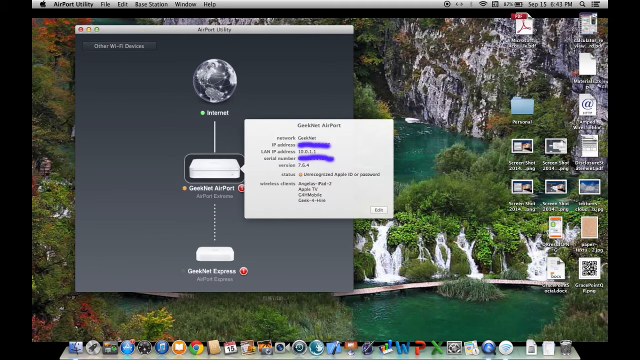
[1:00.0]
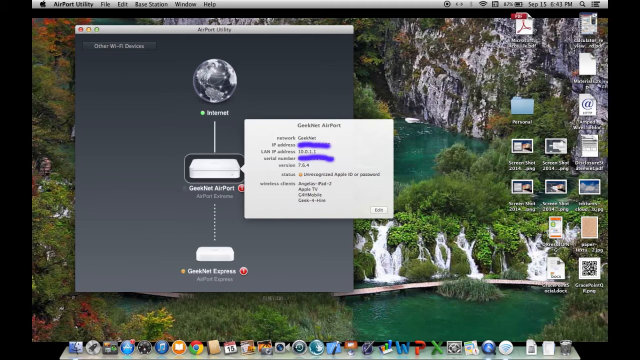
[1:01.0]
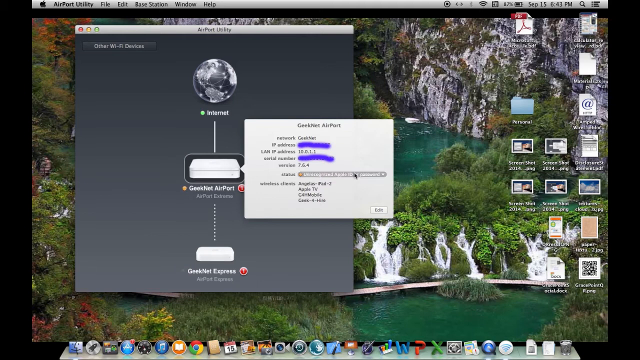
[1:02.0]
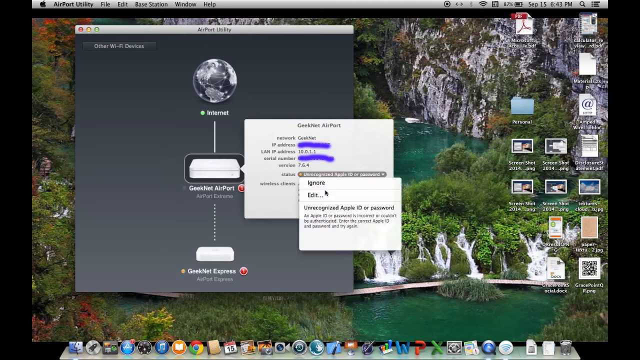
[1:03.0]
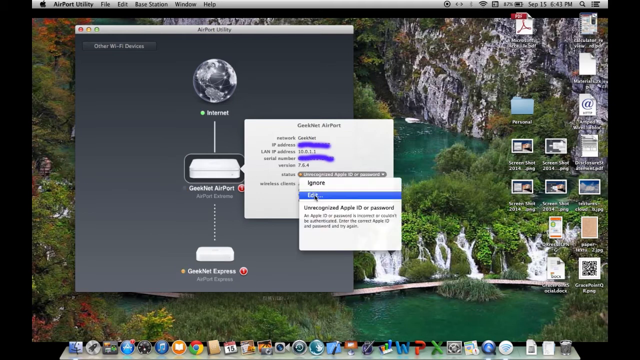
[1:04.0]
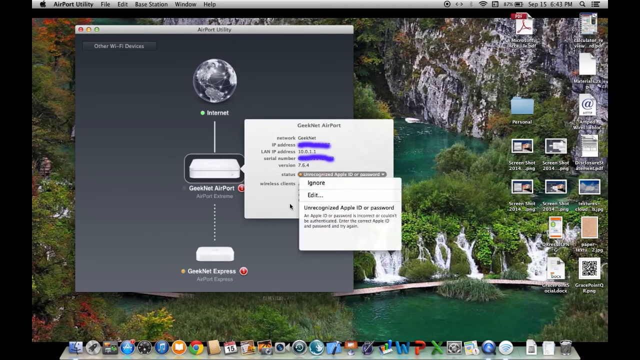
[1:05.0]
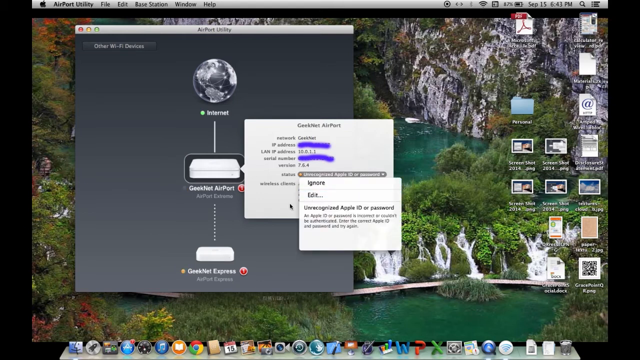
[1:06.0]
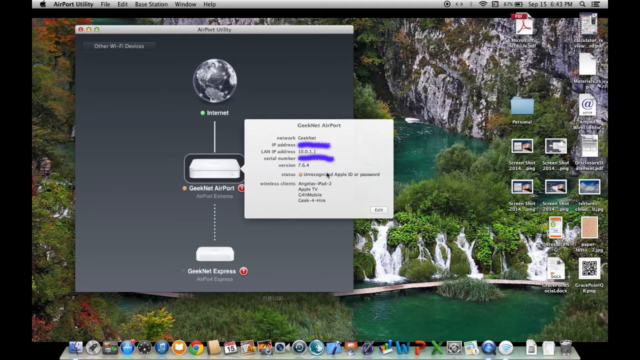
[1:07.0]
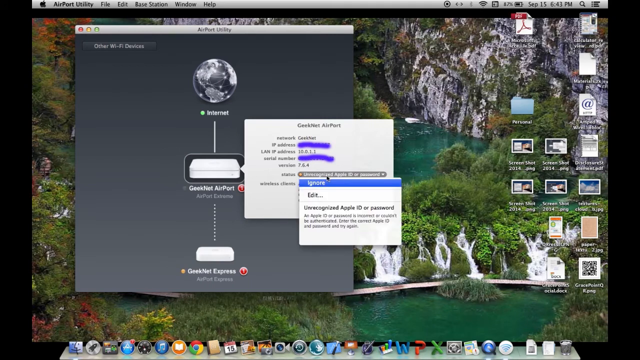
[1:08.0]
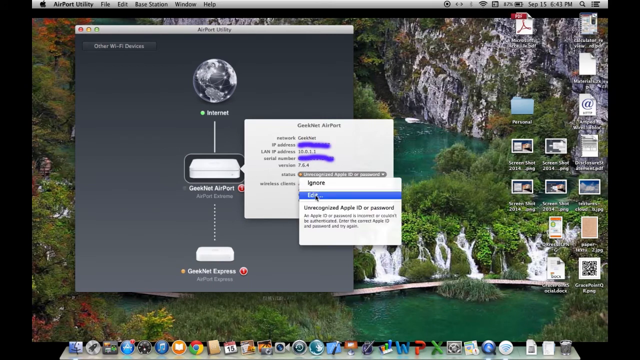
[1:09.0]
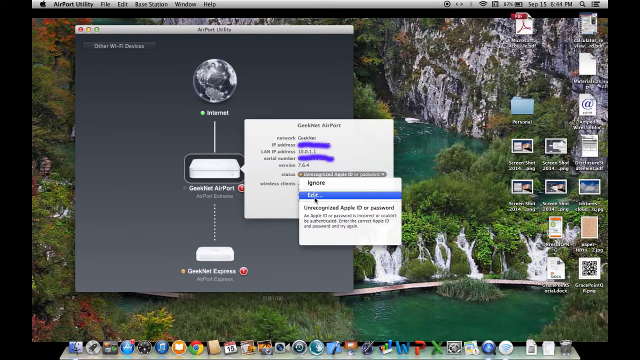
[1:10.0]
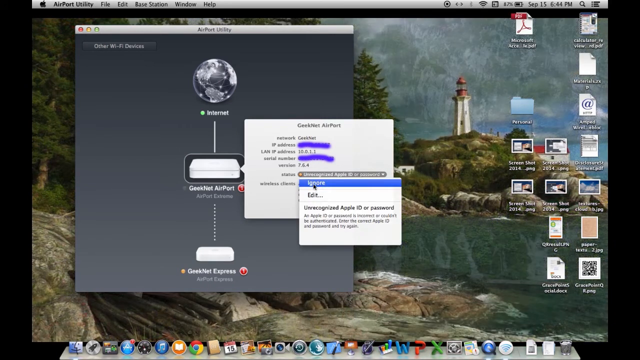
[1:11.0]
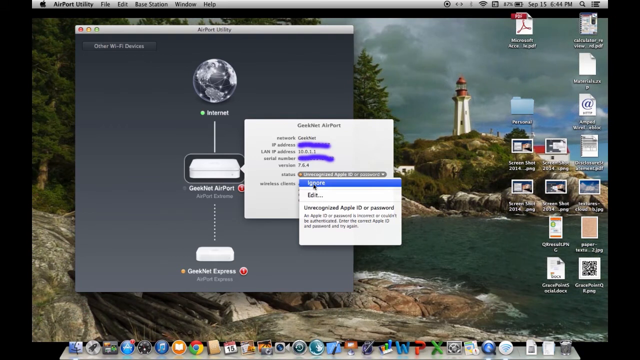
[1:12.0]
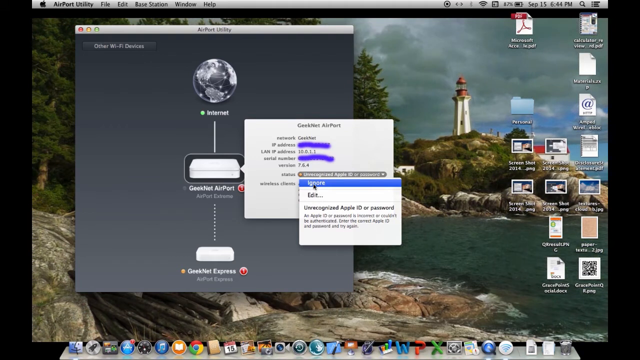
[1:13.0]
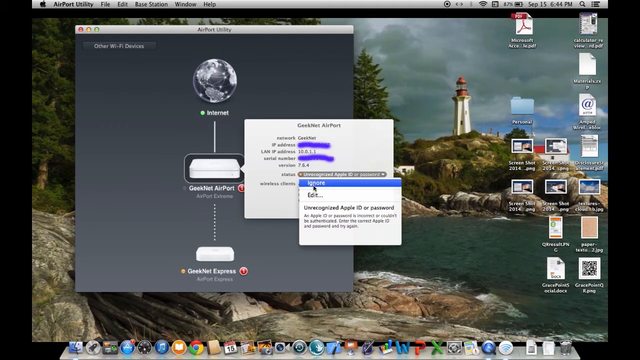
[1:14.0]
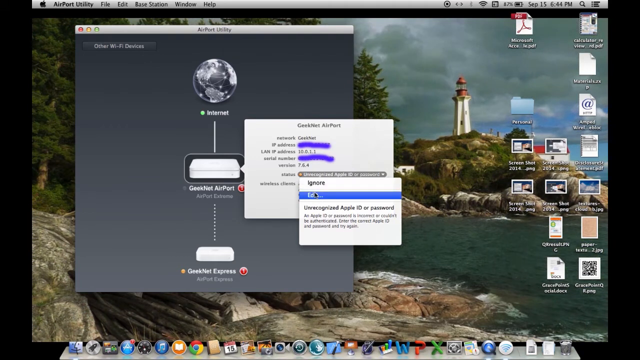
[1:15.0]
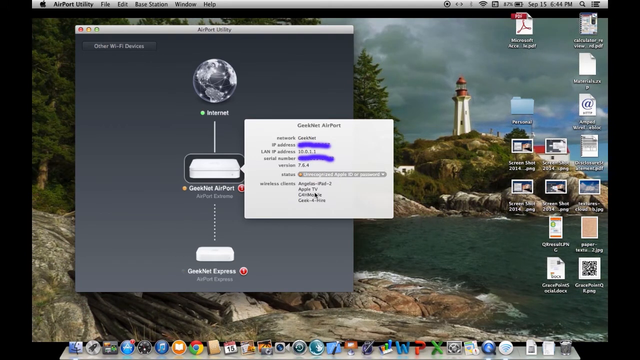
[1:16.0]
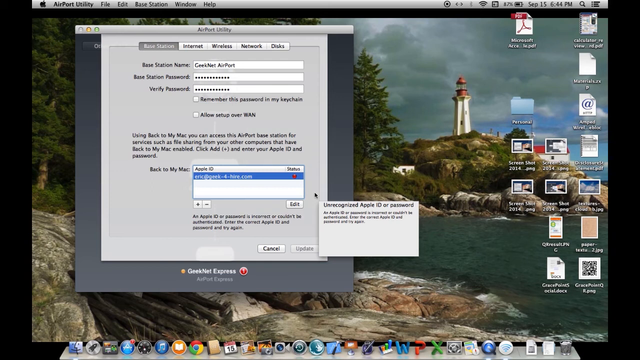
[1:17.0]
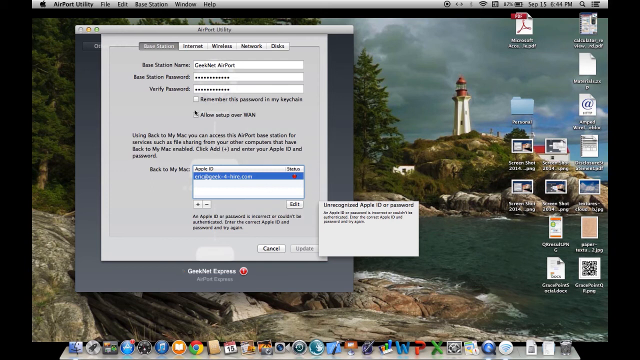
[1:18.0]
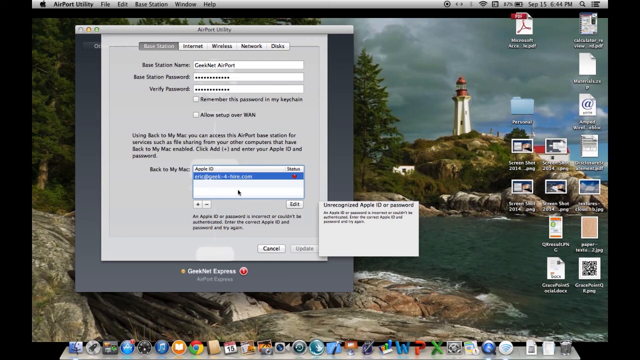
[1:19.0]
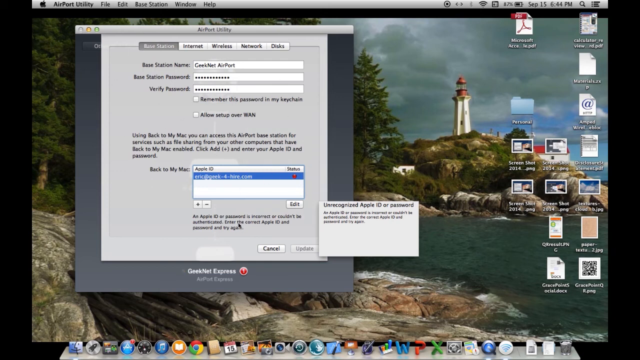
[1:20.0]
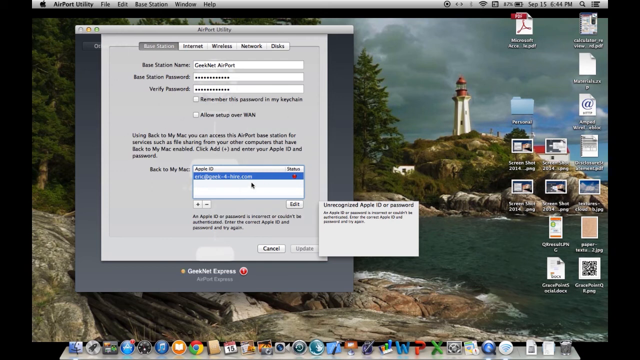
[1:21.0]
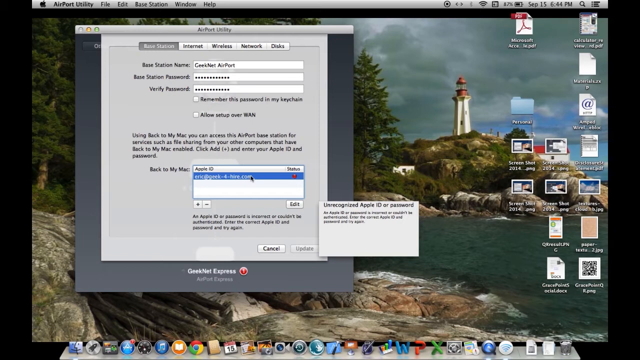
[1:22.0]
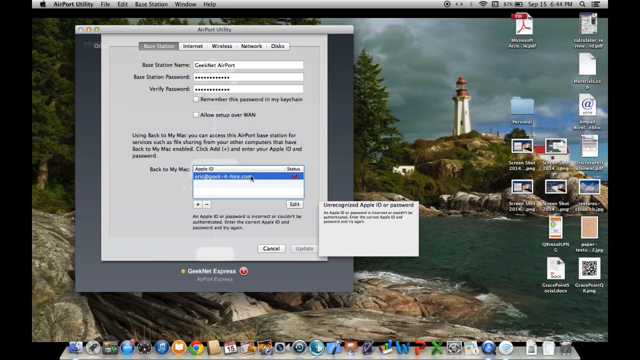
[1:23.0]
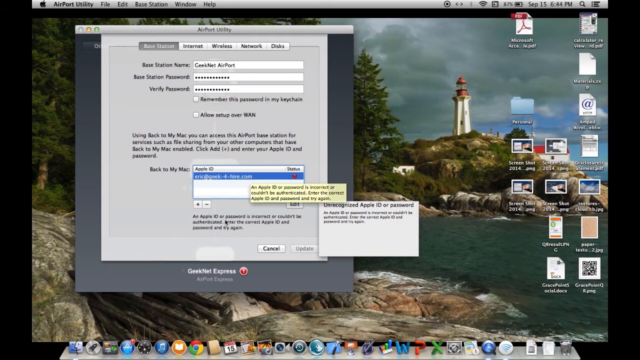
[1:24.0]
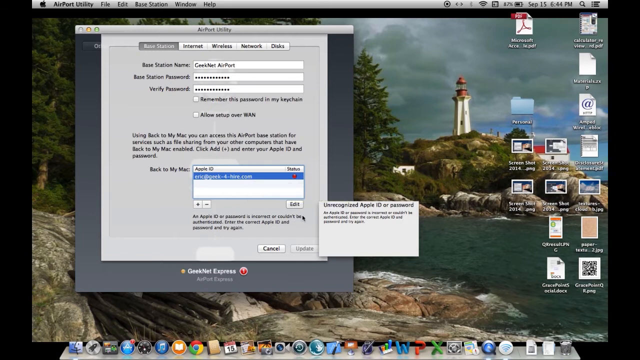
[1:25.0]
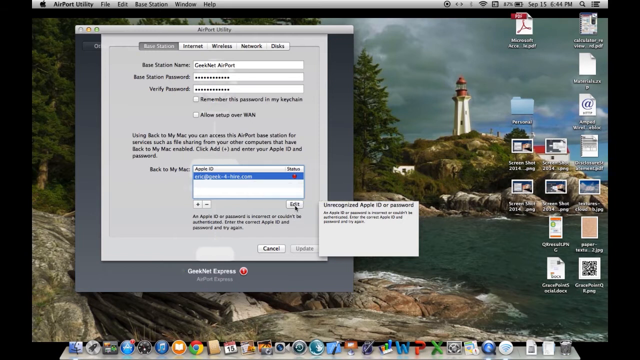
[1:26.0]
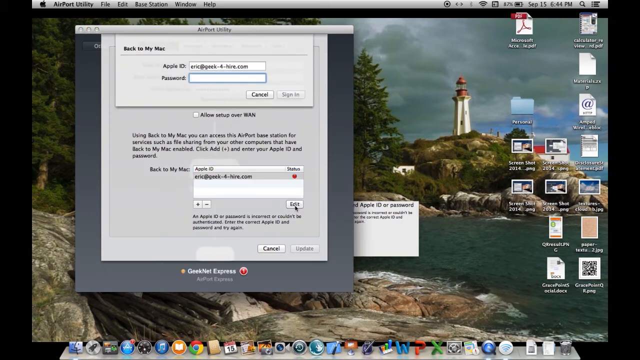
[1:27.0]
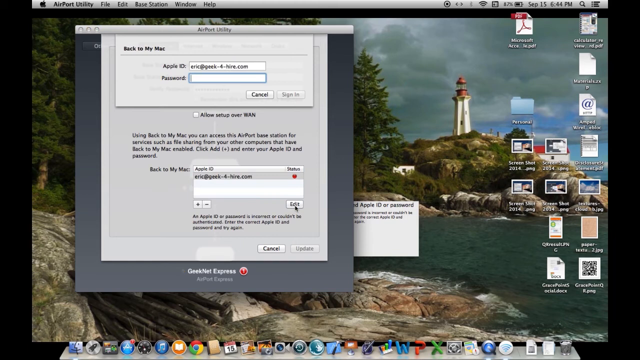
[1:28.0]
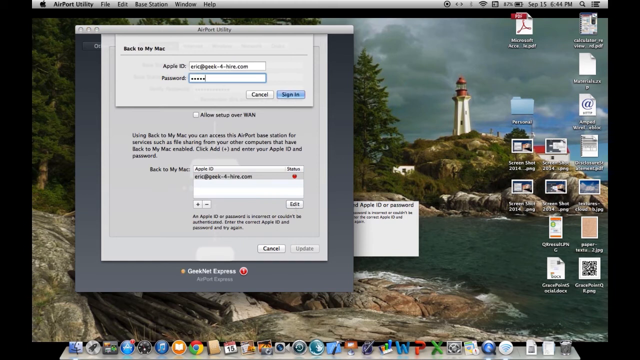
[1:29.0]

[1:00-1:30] The user checks an option to ignore something, scrolls down and clicks okay, then clicks edit rather than ignore. A message reads "Unrecognized Apple ID or password." GreekNet Airport is shown not accepting the Apple ID, and the user types something else to try again.